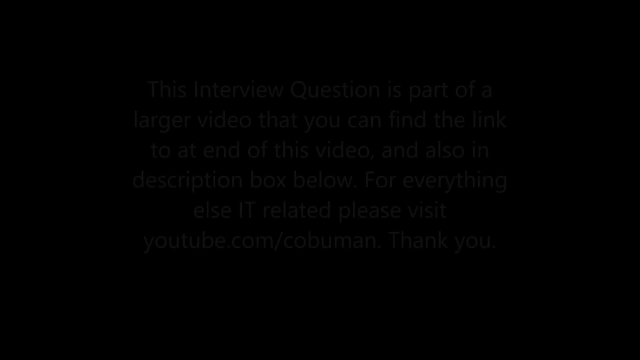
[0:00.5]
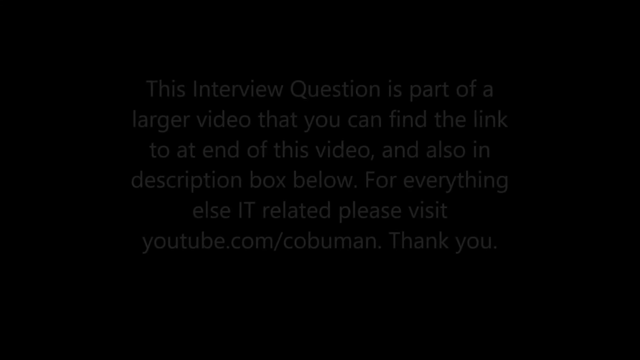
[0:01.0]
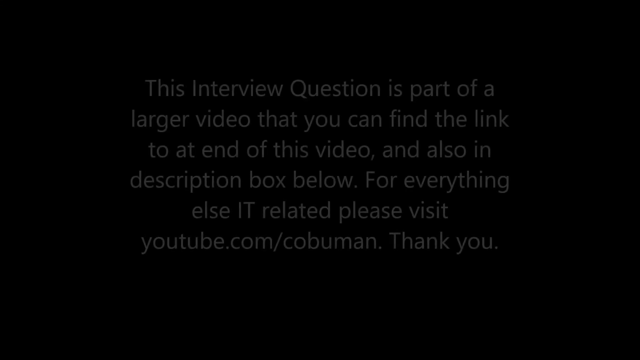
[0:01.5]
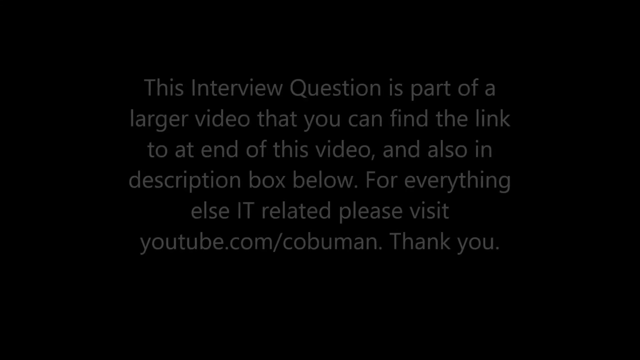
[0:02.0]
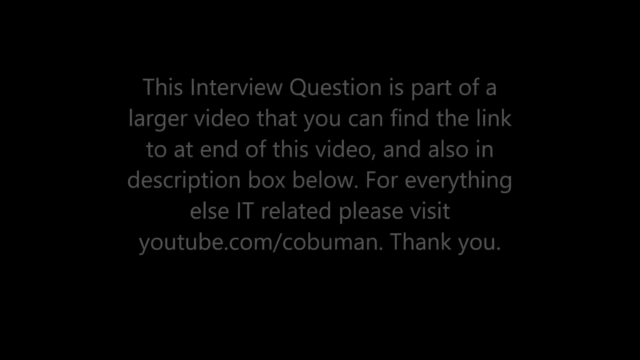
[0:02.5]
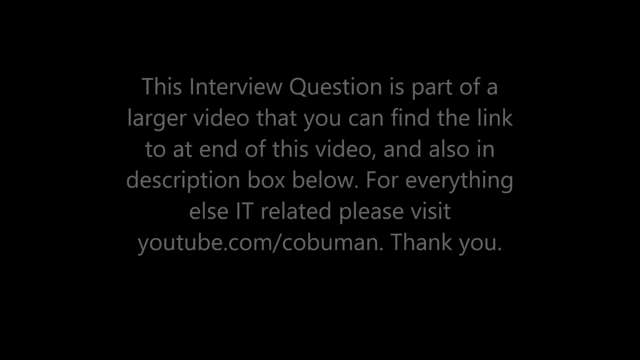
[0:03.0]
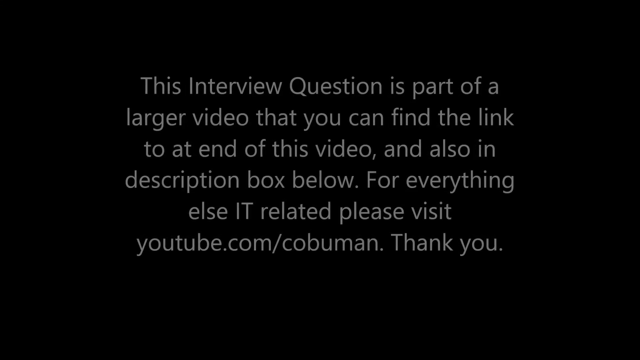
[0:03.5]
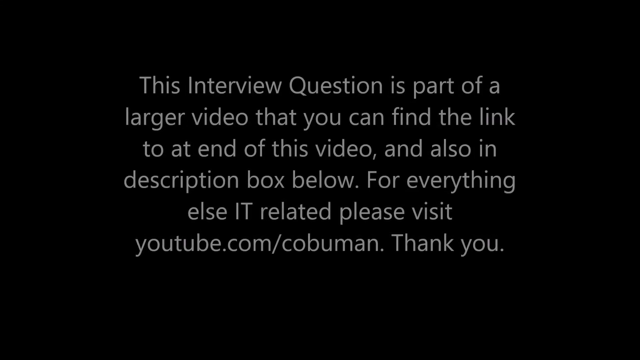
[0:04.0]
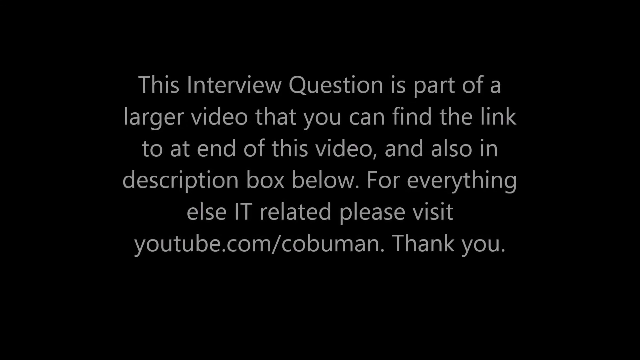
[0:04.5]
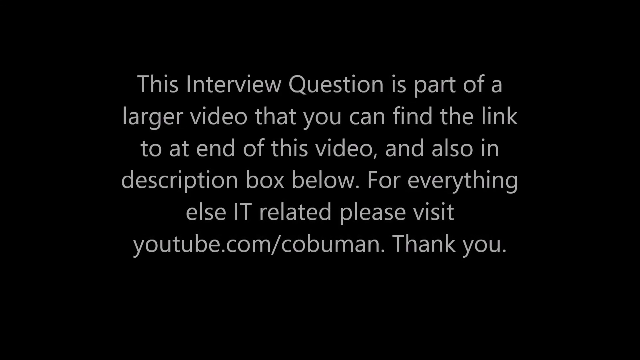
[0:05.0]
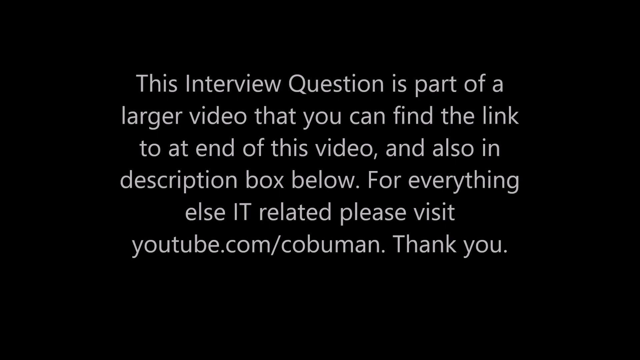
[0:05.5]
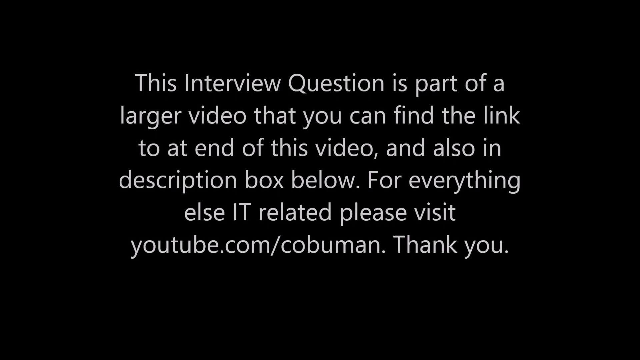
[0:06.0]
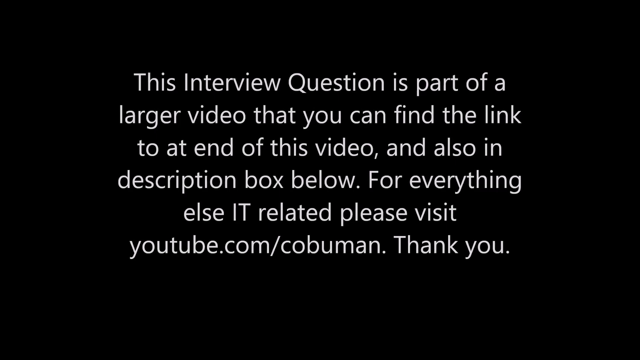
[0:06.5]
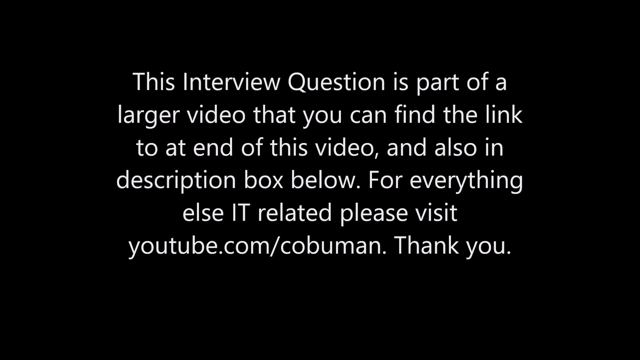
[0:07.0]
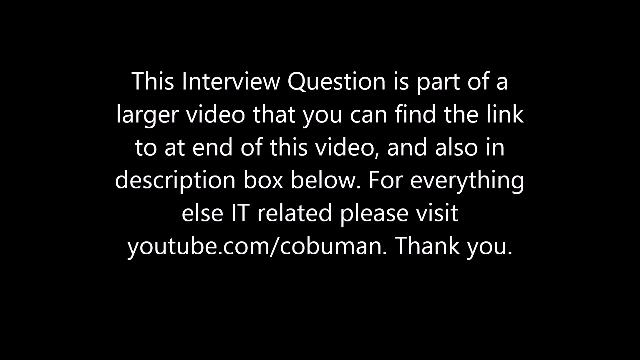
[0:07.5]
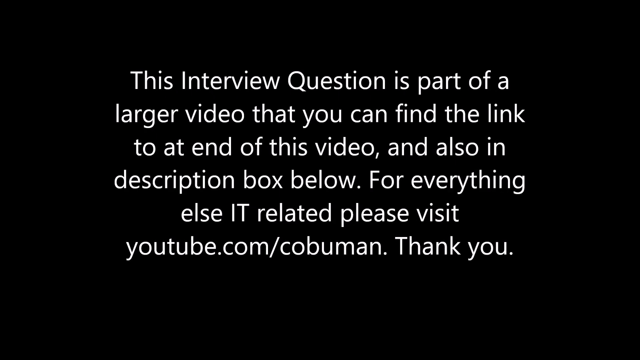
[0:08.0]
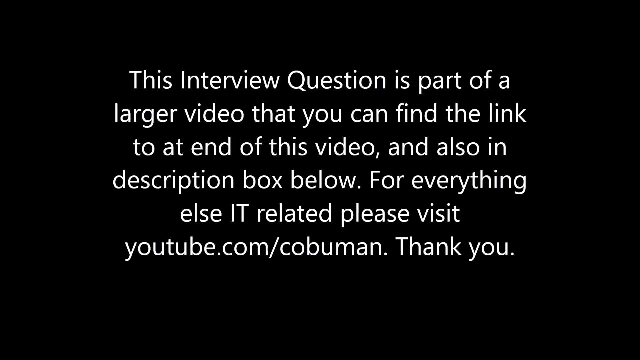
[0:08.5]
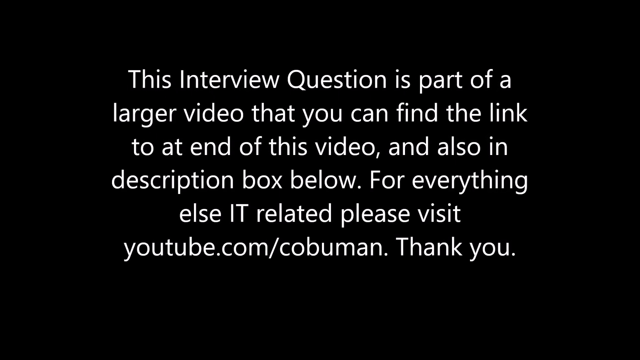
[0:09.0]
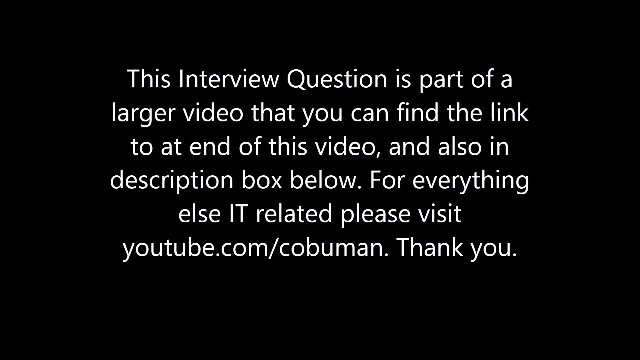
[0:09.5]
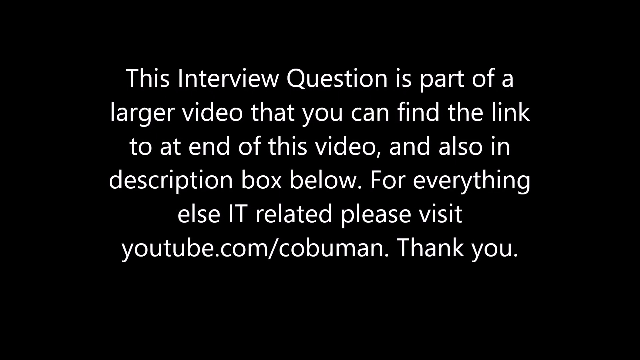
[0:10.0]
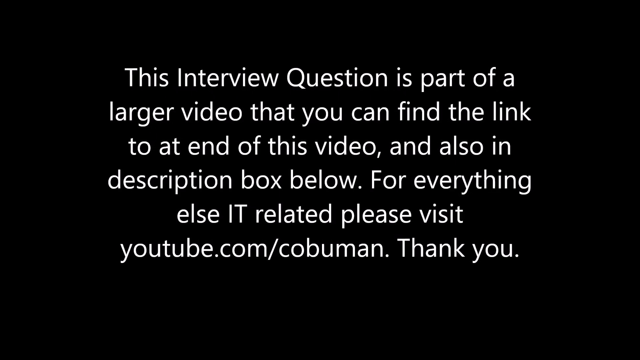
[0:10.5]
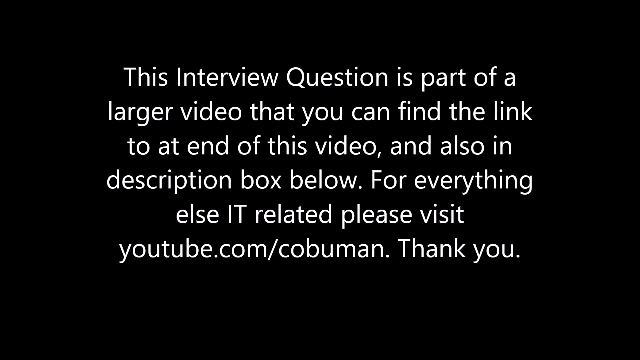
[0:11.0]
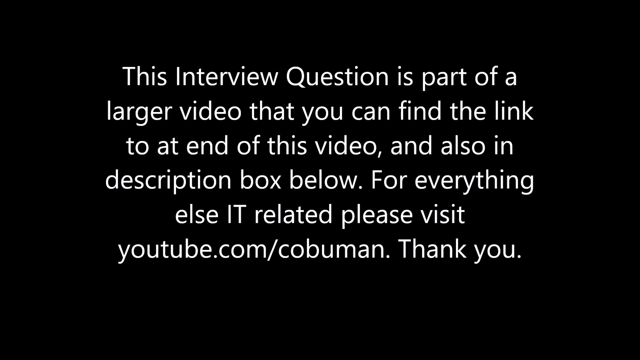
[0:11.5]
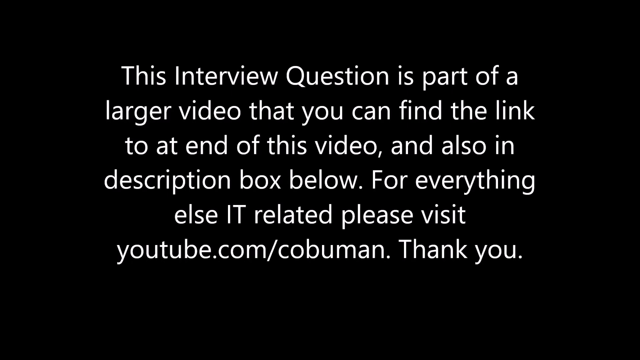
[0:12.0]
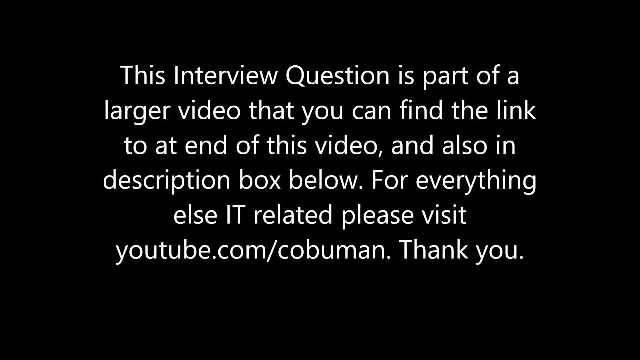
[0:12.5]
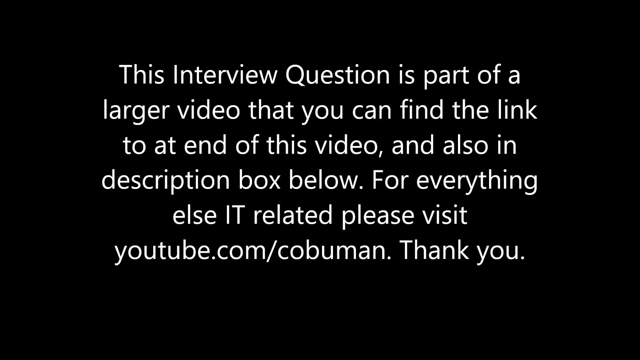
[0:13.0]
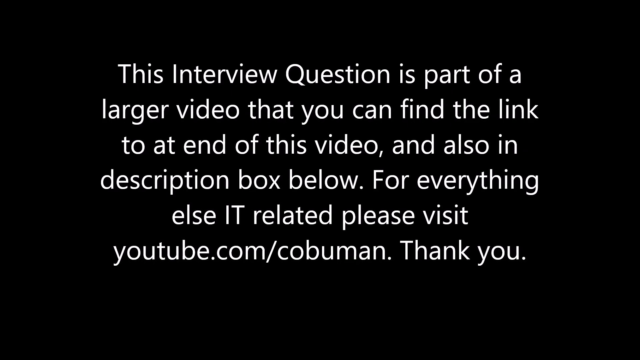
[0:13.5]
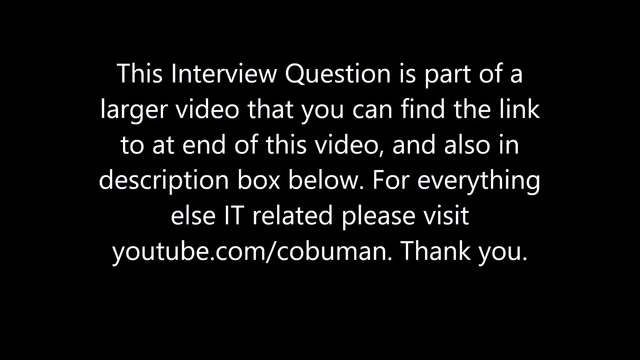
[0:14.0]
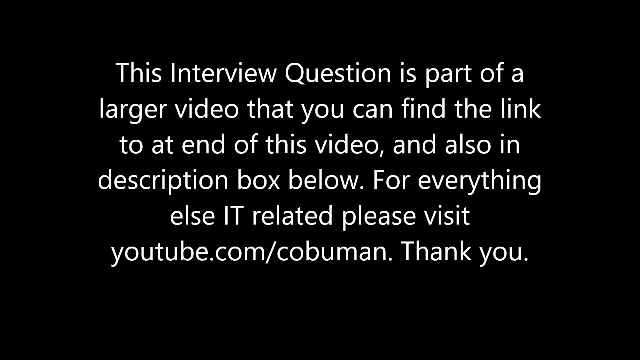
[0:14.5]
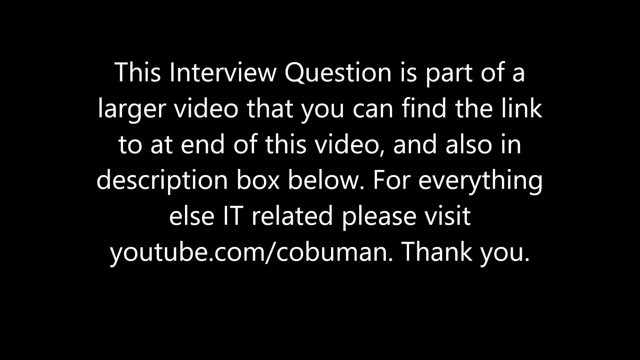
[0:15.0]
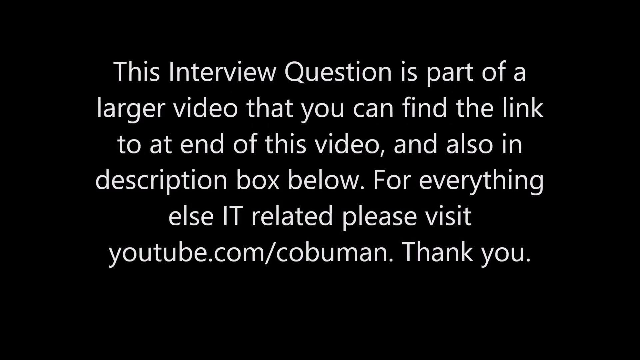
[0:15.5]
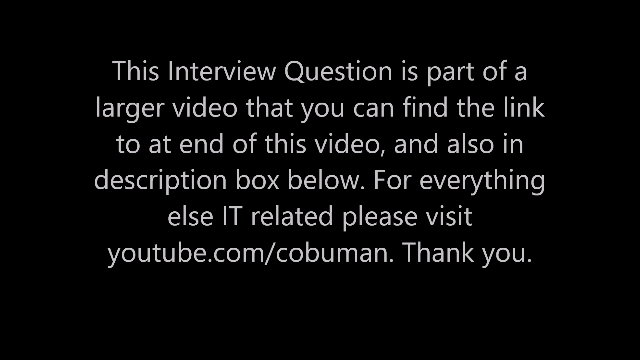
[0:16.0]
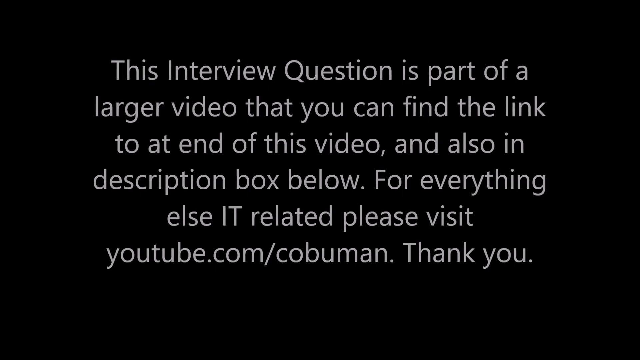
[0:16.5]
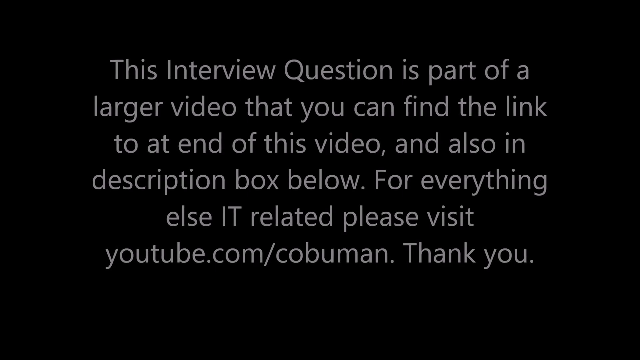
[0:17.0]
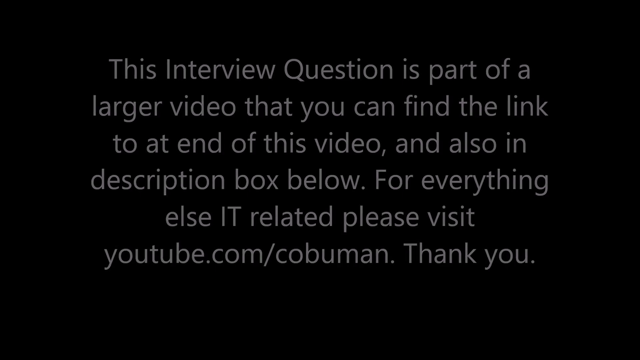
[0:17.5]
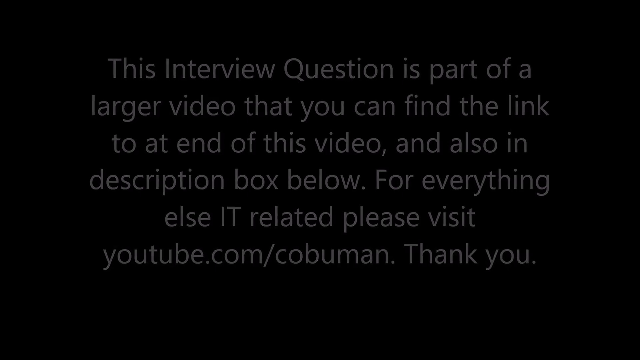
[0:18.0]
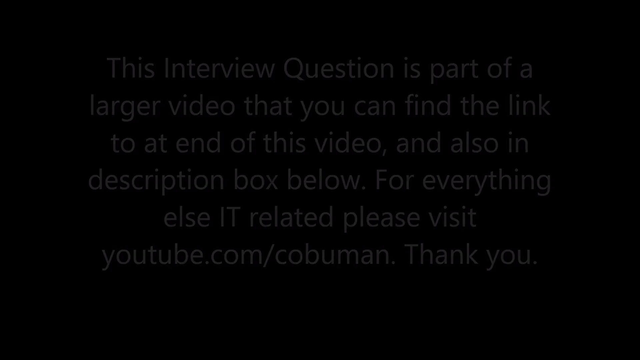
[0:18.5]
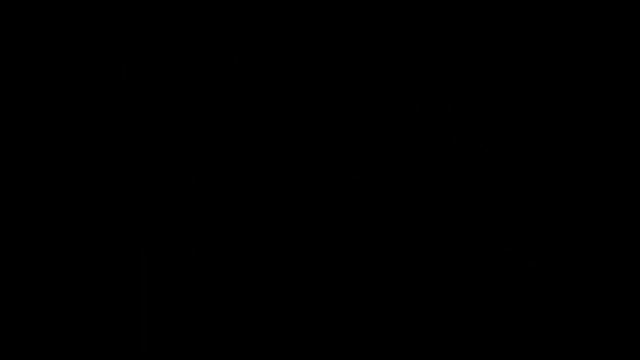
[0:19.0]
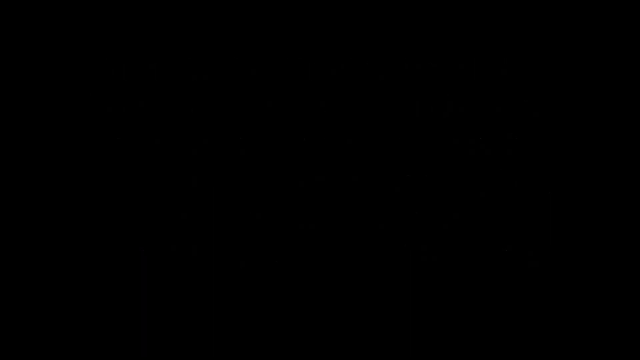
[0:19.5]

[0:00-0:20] White text that seems to preface what the upcoming video will be about gradually fades in until it is in full view. It reads: "This interview question is part of a larger video that you can find a link to at the end of this video and also in description box below. For everything else IT related please visit youtube.com/kombuman. Thank you." The text is in a simple white sans serif font and takes up most of the centre of the screen, and it slowly zooms inwards. It then slowly fades away to black until it is no longer visible, and a short white glowing flash that appears to be like a star follows at the end, presumably a transitional animation leading into the next segment of the video.